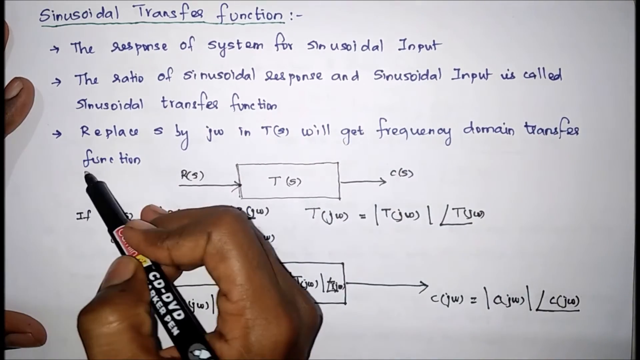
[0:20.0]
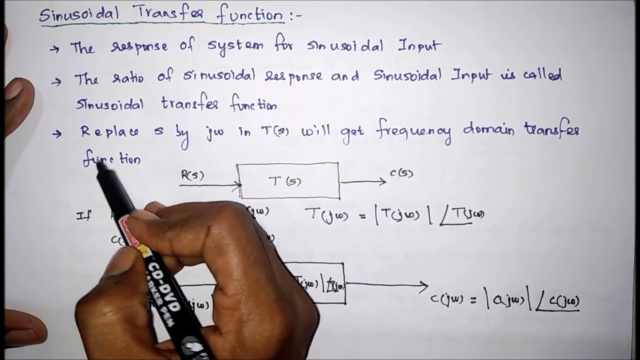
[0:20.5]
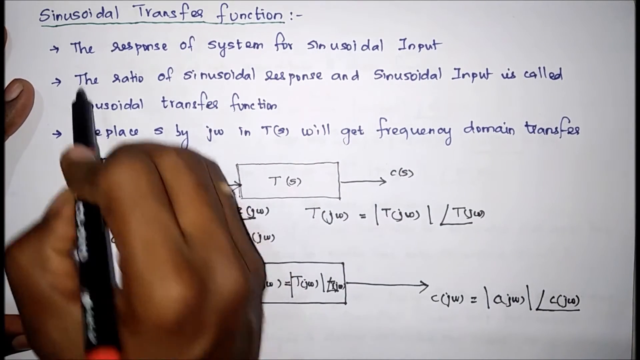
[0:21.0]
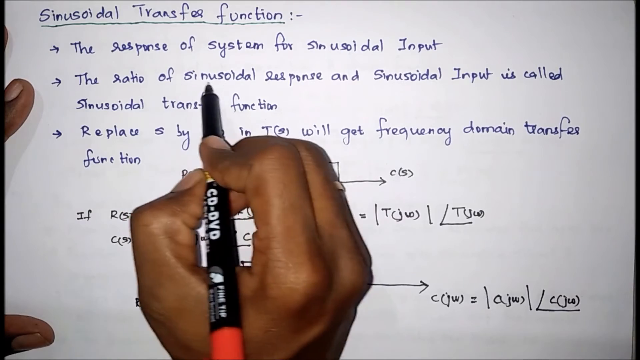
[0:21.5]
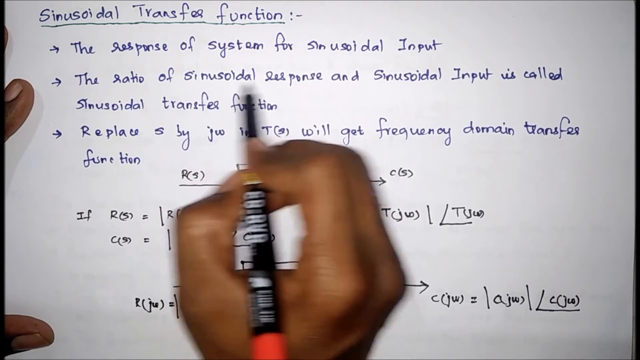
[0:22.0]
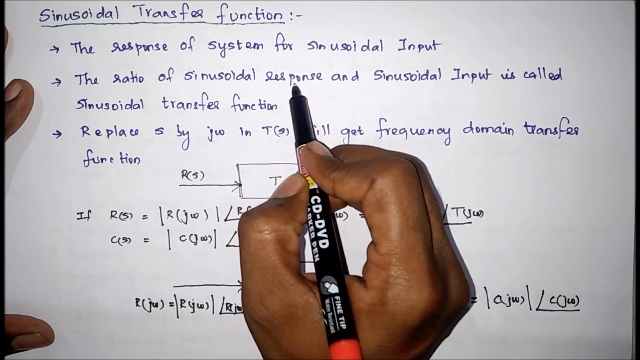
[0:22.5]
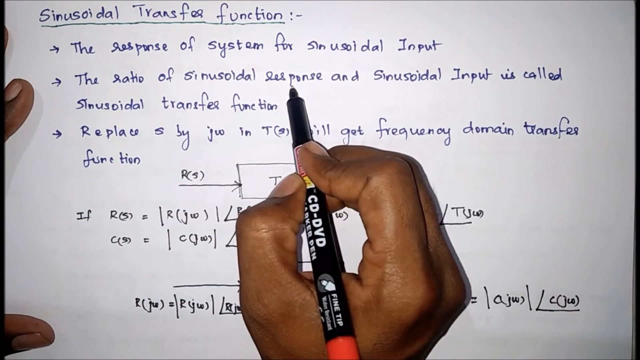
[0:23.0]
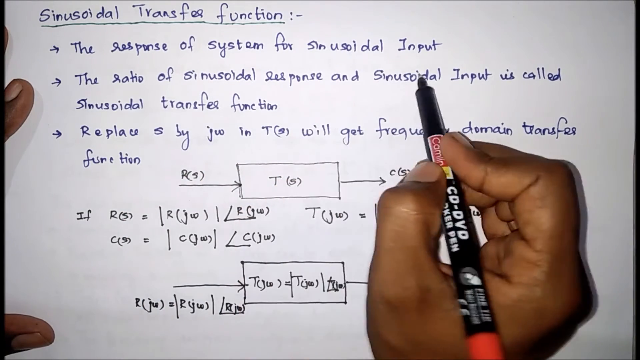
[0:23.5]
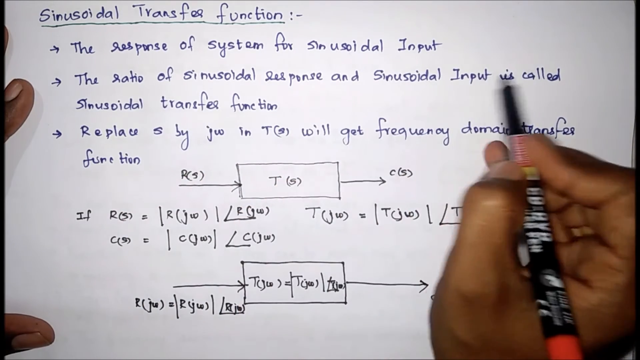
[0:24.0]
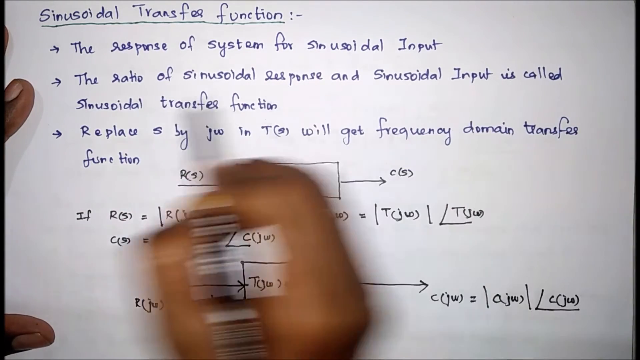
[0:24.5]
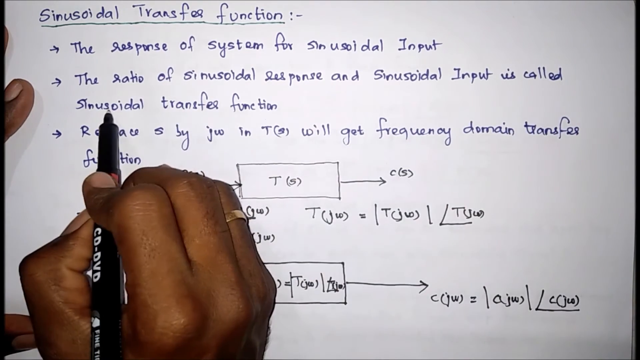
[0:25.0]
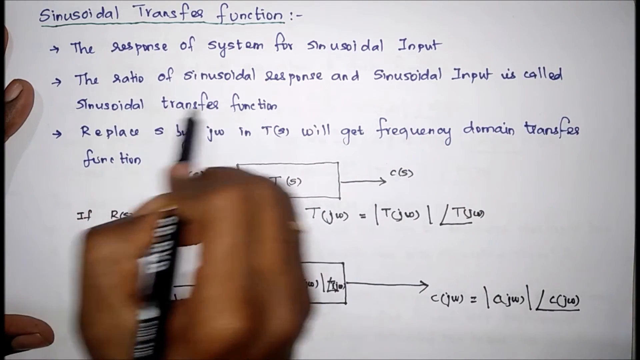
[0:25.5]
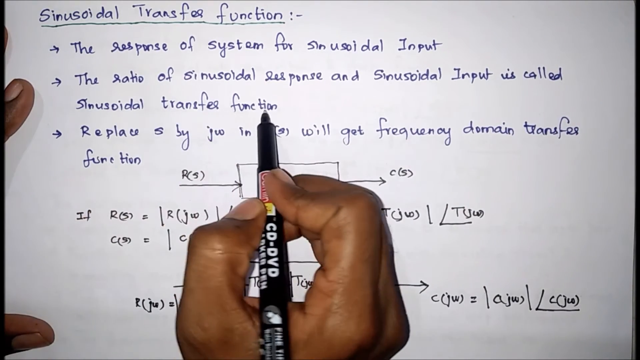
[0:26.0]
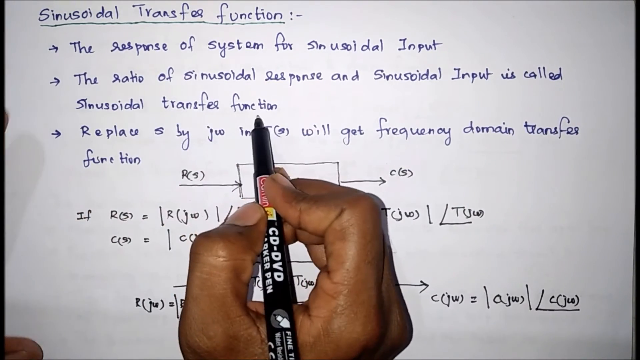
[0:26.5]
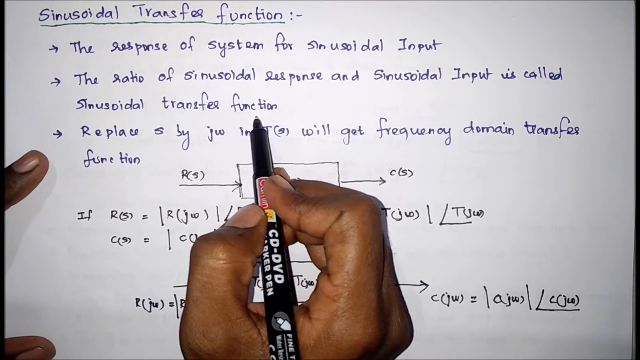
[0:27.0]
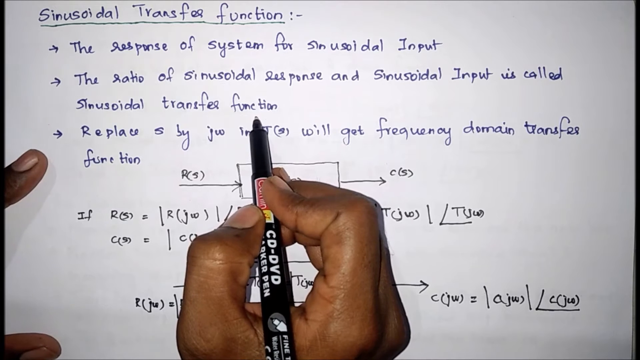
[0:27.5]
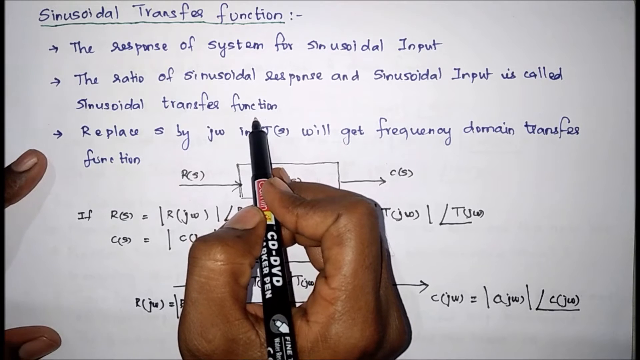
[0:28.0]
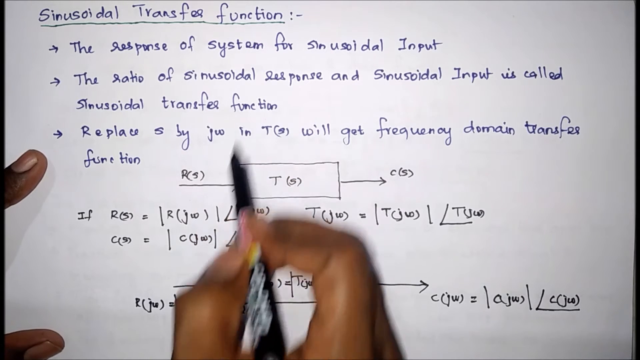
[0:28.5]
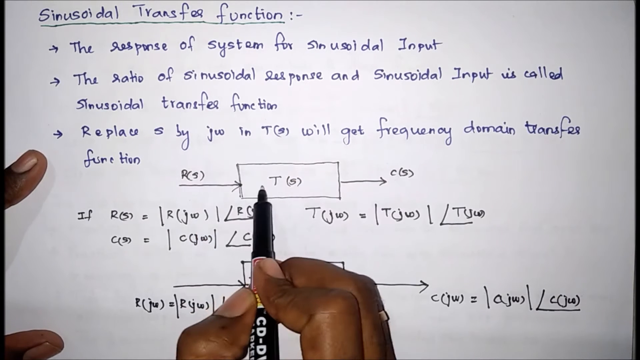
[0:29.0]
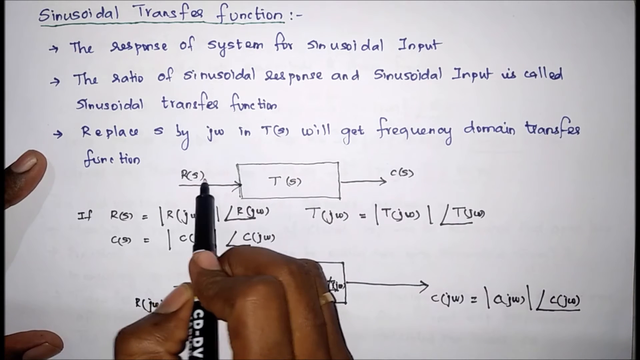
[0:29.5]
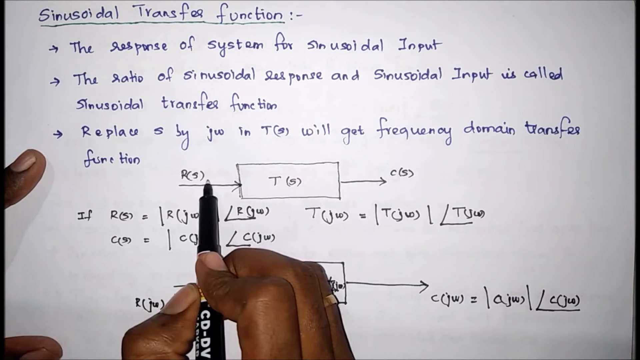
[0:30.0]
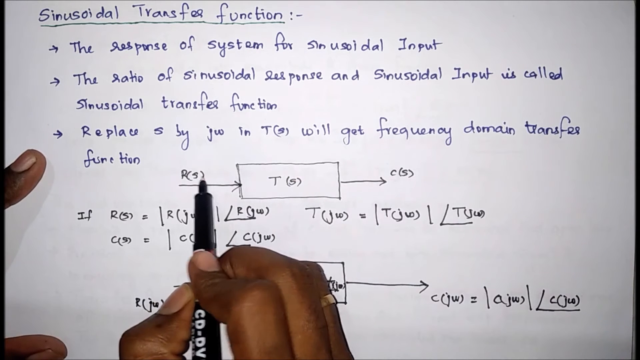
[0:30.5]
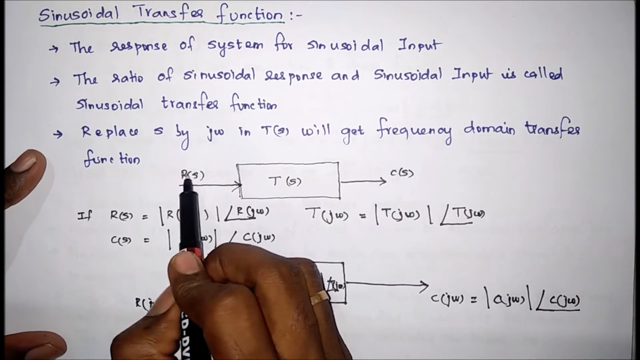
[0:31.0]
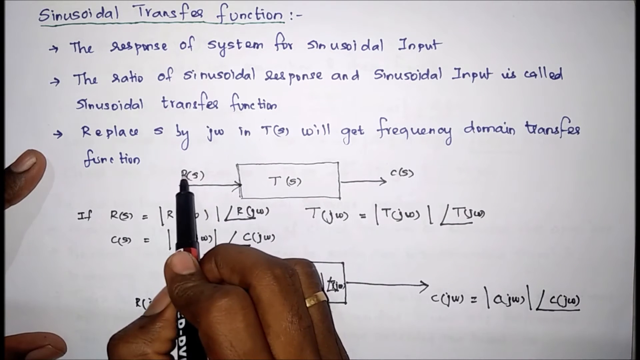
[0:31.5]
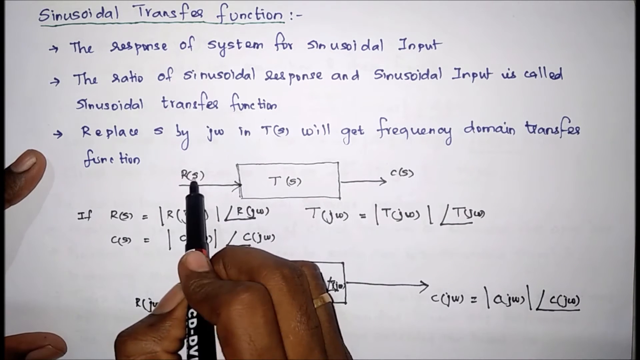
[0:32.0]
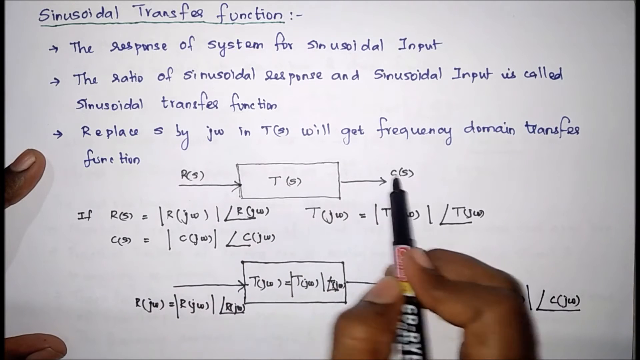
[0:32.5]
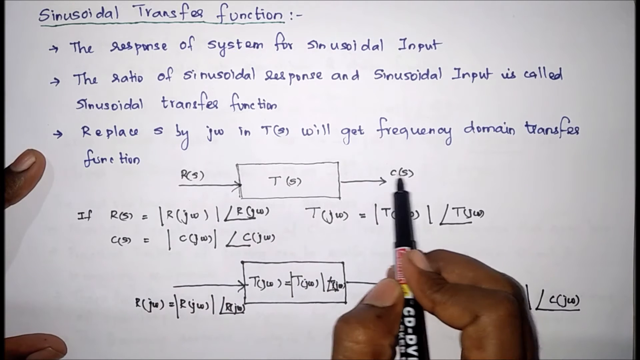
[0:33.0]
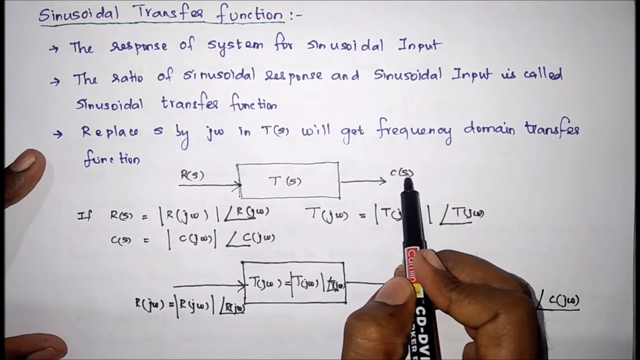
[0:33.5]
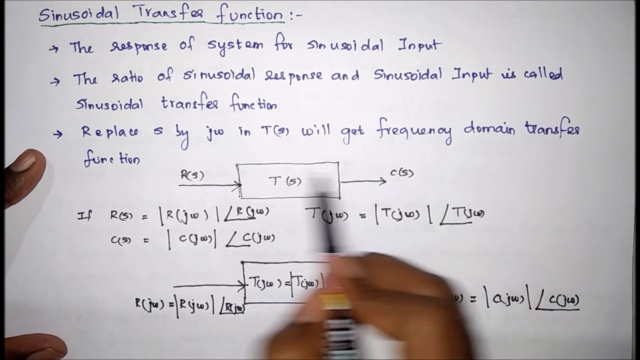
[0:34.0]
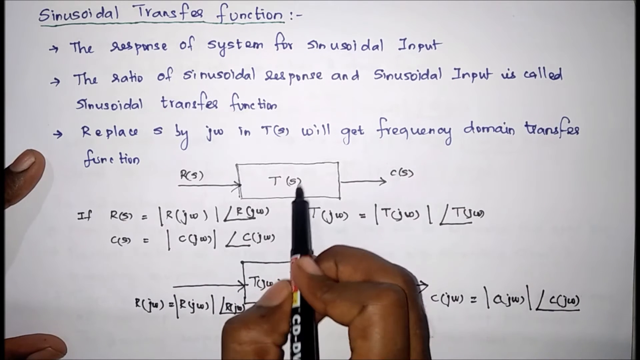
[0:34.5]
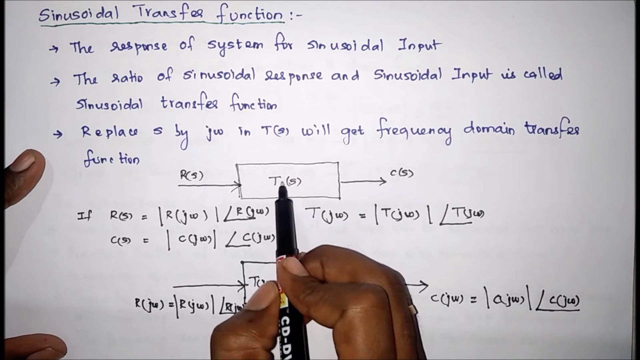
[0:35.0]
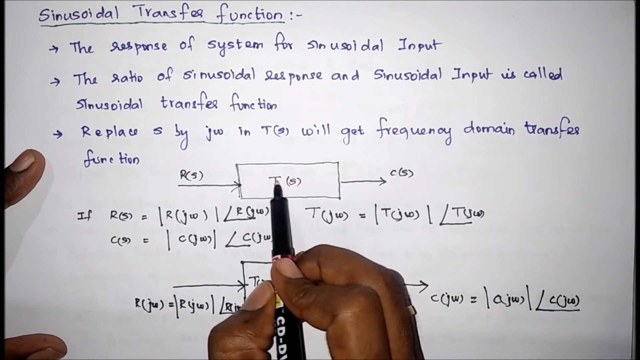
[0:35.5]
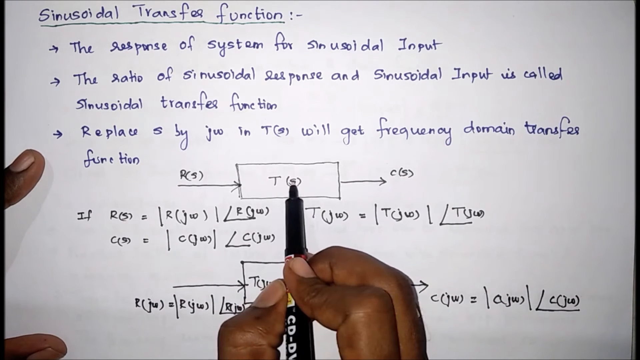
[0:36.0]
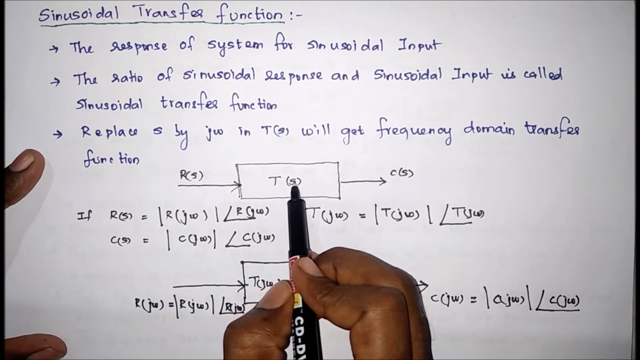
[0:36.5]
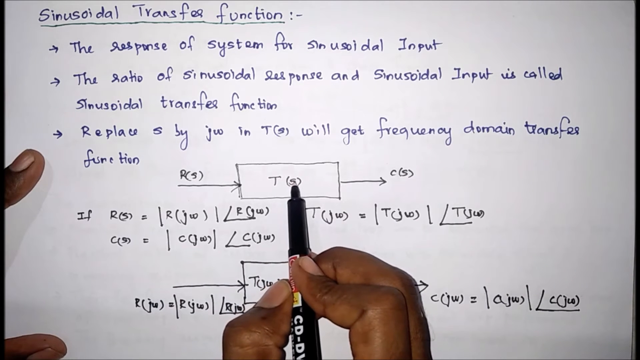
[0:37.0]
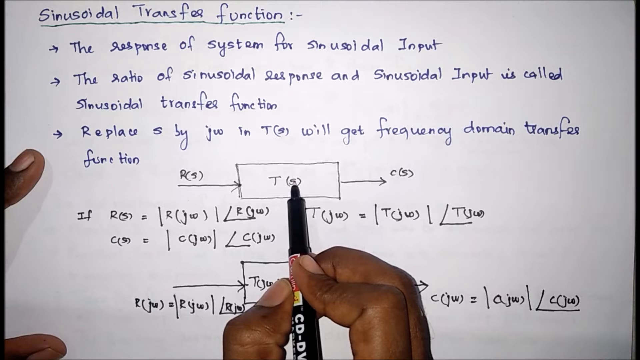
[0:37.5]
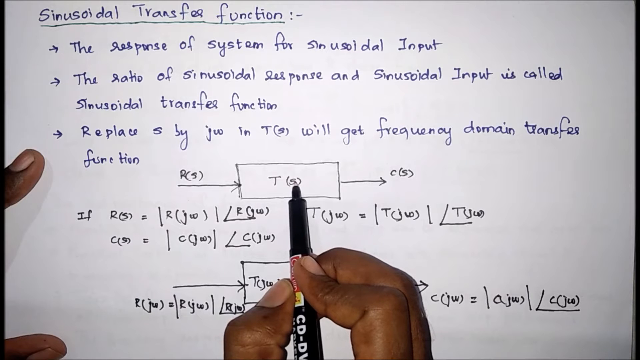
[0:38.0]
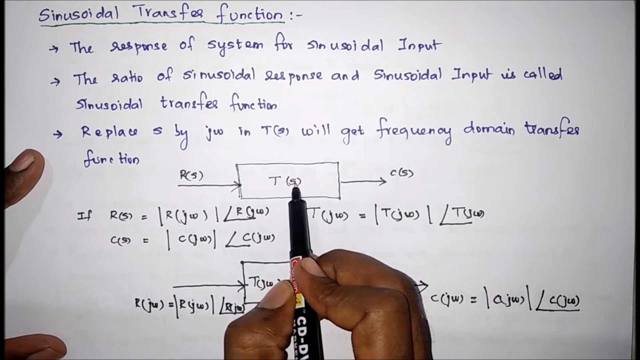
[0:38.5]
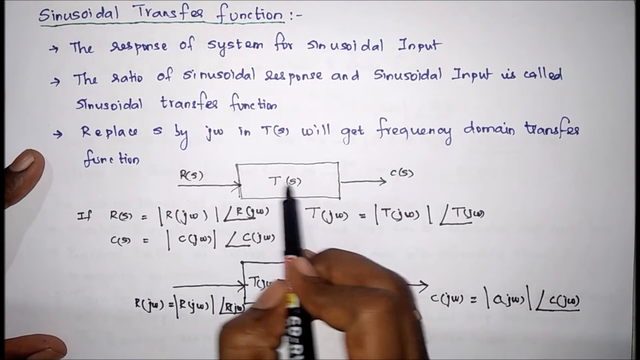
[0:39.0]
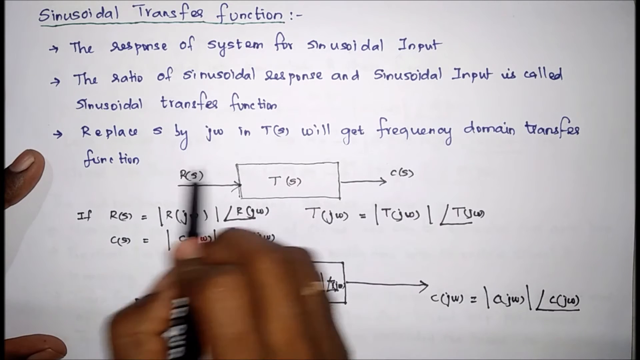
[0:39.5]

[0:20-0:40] The hand of a black person holds a black pen bearing some text and branding over a handwritten note written in both blue and black pen. The note is titled "Sinusoidal Transfer Function," followed by a bulleted list of statements, including "The response of system for sinusoidal input" and "The ratio of sinusoidal response and sinusoidal input is called sinusoidal transfer function." The person holds the pen in their right hand while three fingers of the left hand are partially visible, resting on the left-hand side of the note. Judging by the movement of the pen, the person seems to be explaining the concept to their followers. The pen hovers over a diagram indicating some form of process that goes from P(s) into a rectangle with T(s) and comes out as C(s), with the input and output represented by an input arrow and an output arrow respectively.